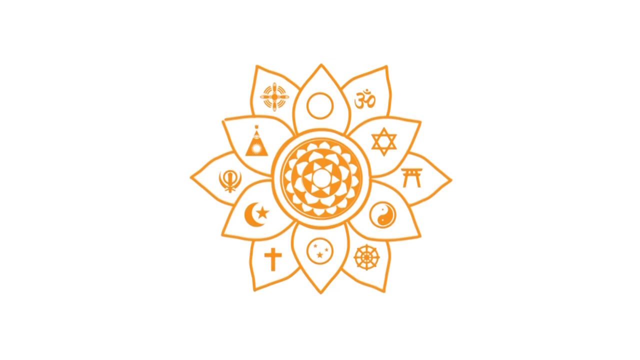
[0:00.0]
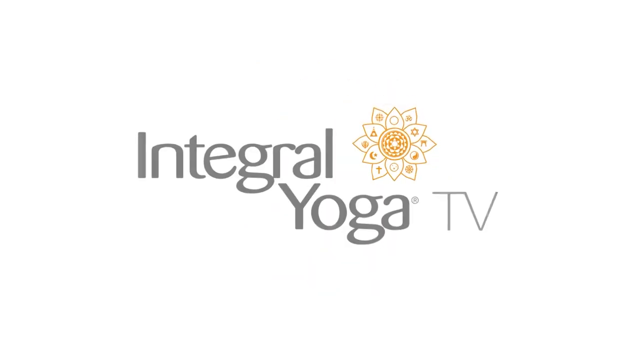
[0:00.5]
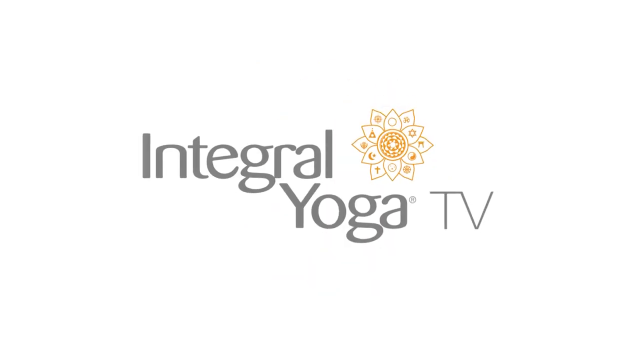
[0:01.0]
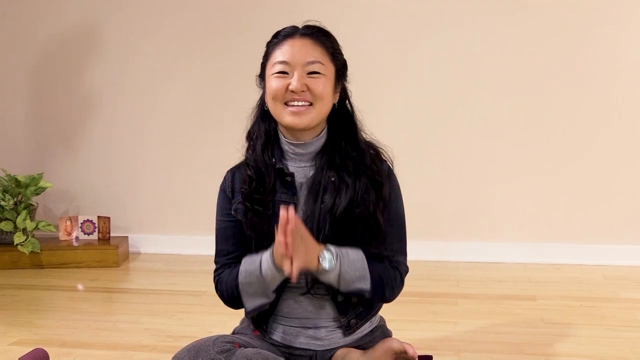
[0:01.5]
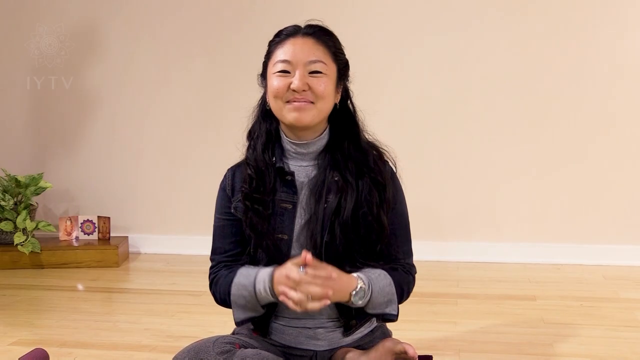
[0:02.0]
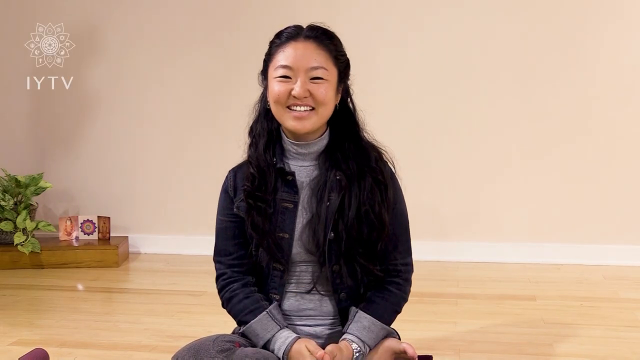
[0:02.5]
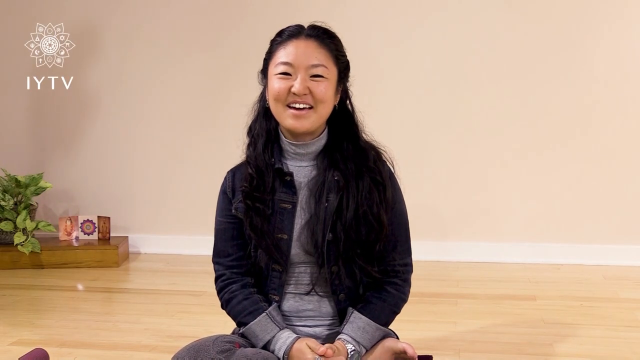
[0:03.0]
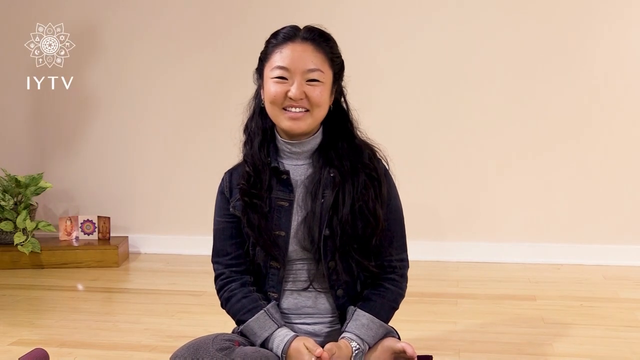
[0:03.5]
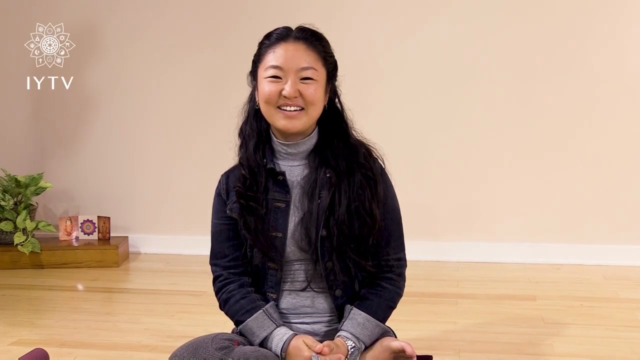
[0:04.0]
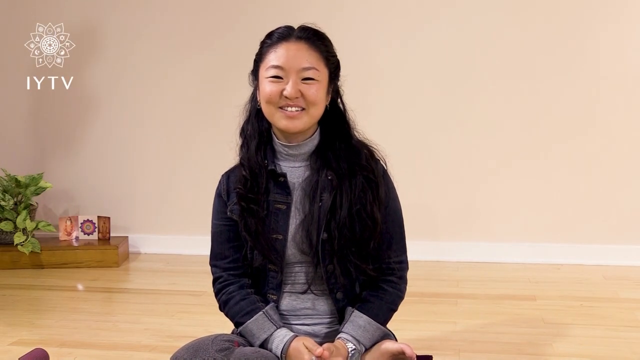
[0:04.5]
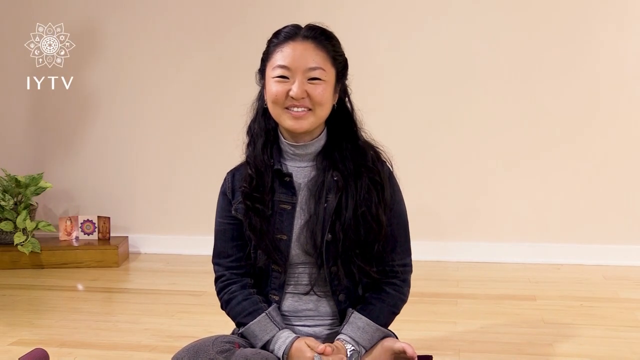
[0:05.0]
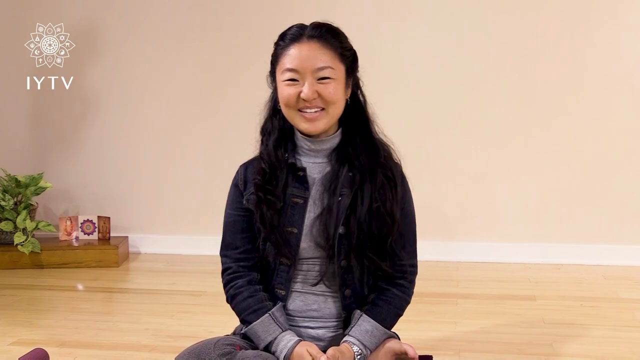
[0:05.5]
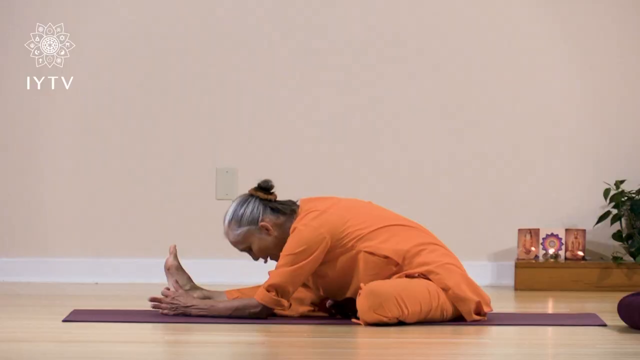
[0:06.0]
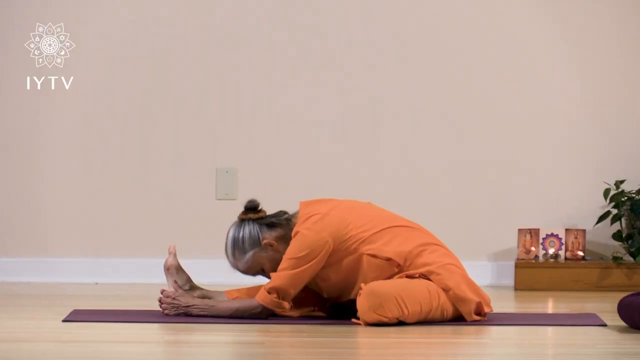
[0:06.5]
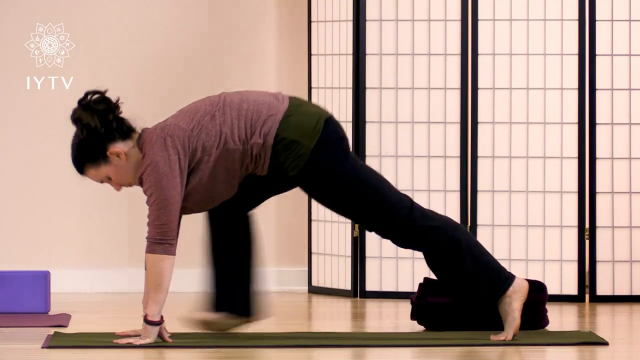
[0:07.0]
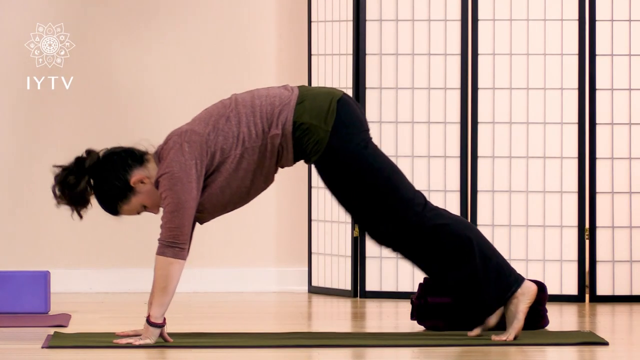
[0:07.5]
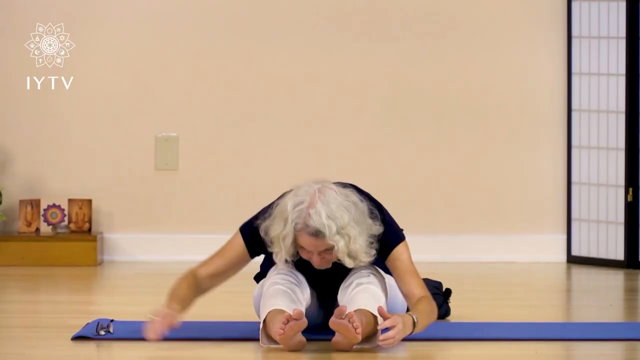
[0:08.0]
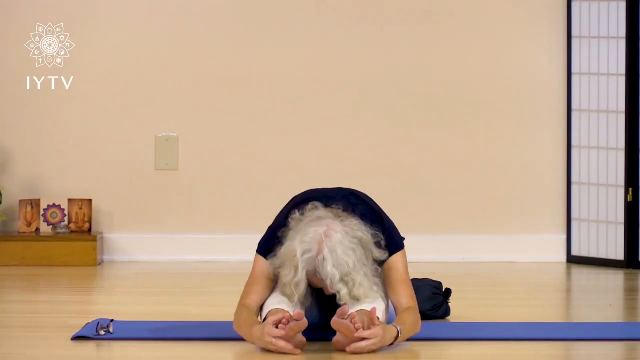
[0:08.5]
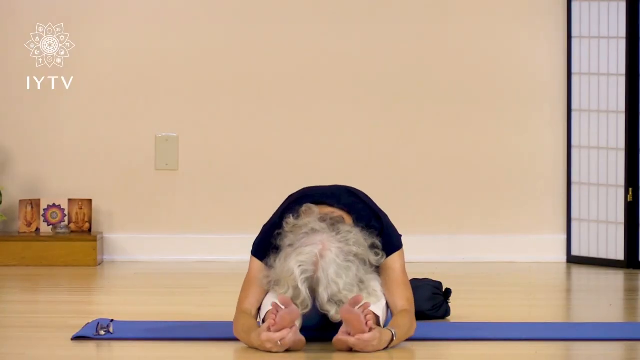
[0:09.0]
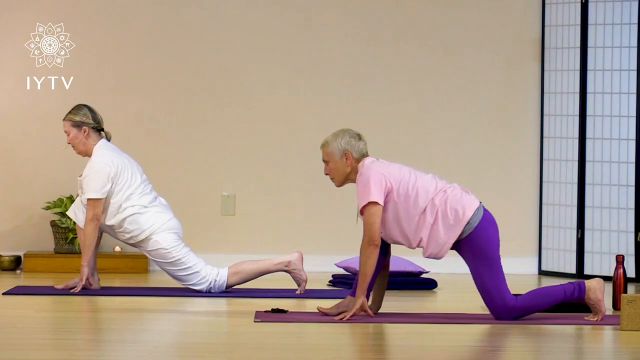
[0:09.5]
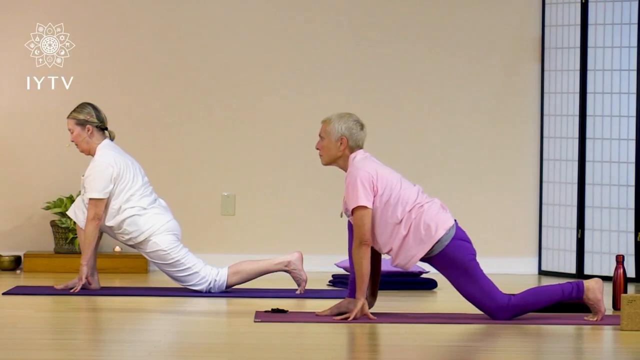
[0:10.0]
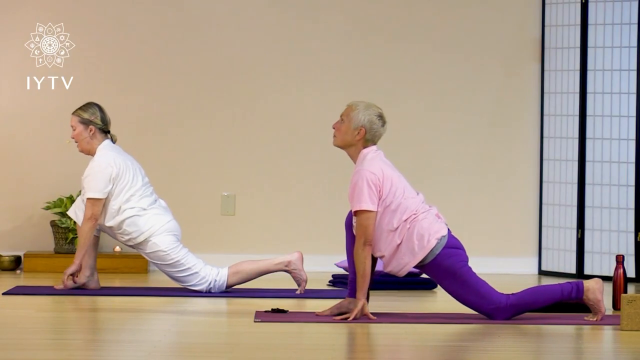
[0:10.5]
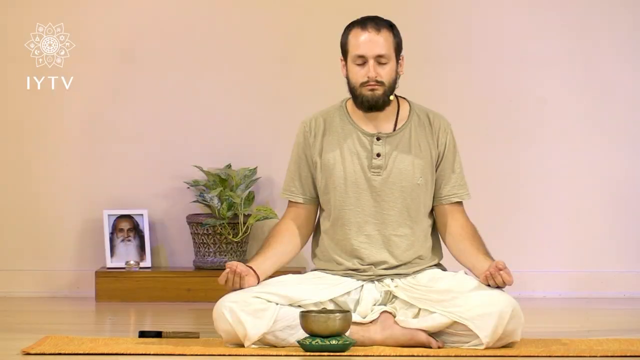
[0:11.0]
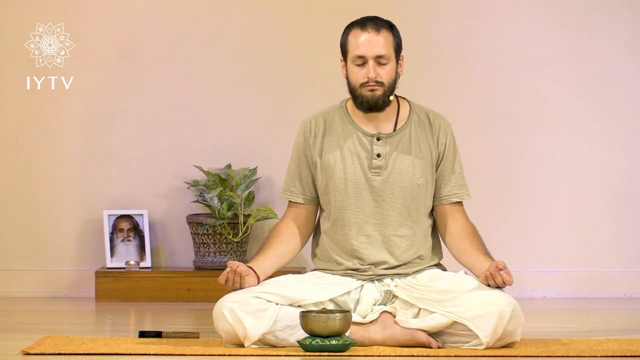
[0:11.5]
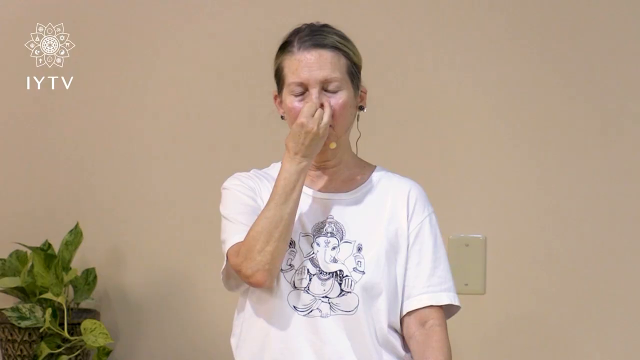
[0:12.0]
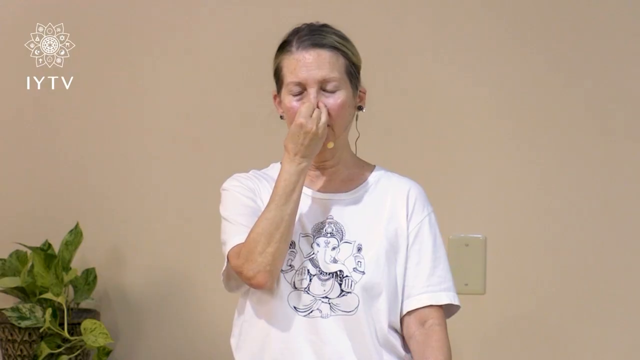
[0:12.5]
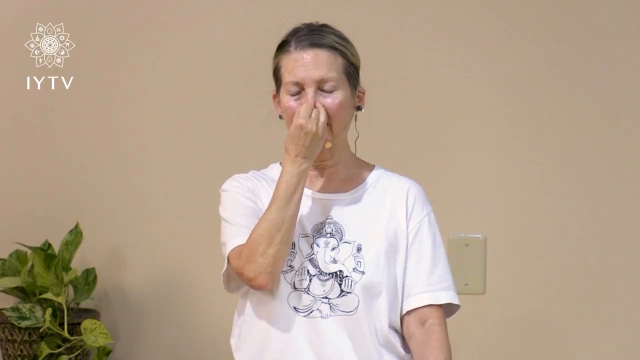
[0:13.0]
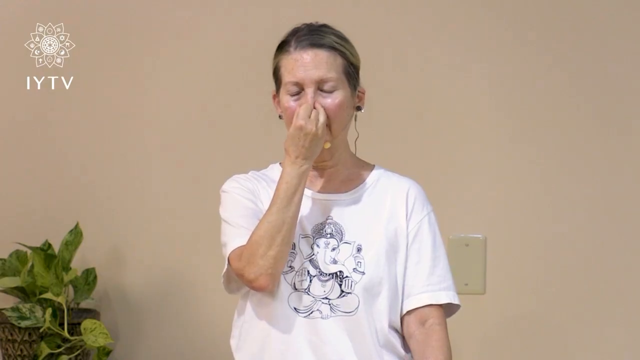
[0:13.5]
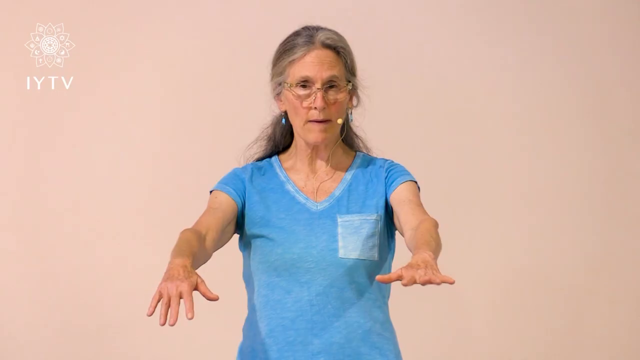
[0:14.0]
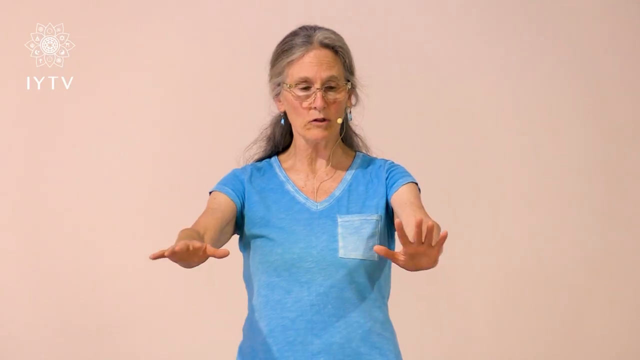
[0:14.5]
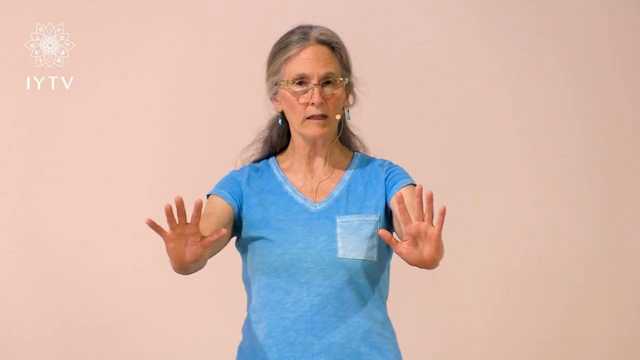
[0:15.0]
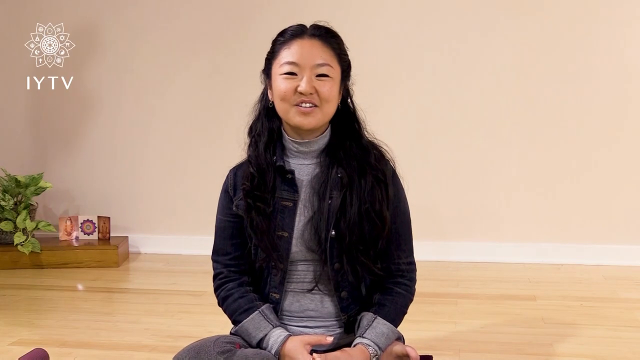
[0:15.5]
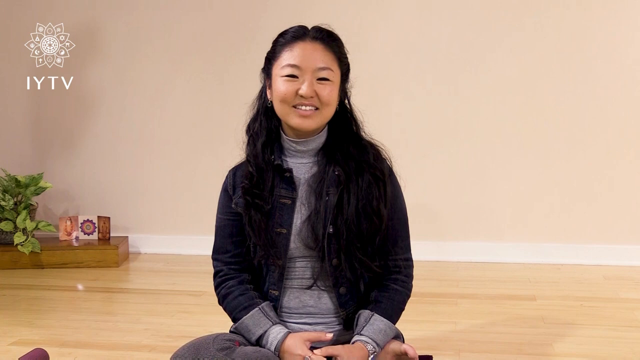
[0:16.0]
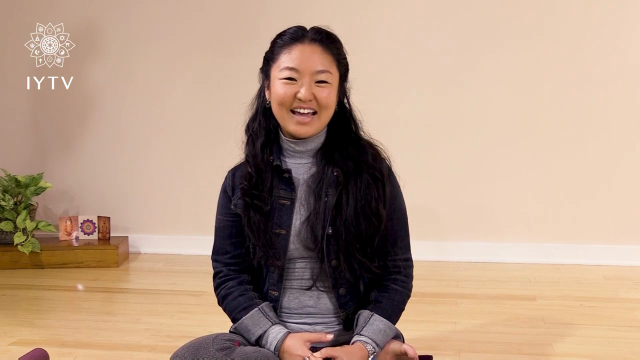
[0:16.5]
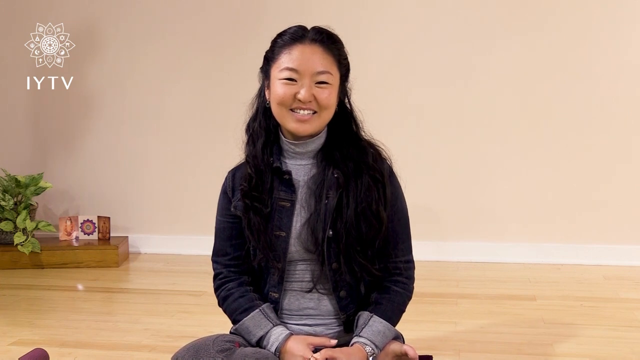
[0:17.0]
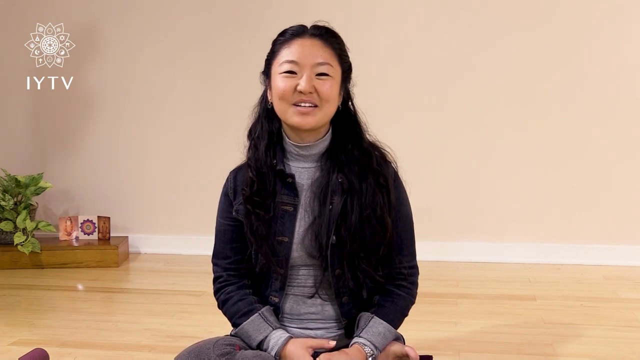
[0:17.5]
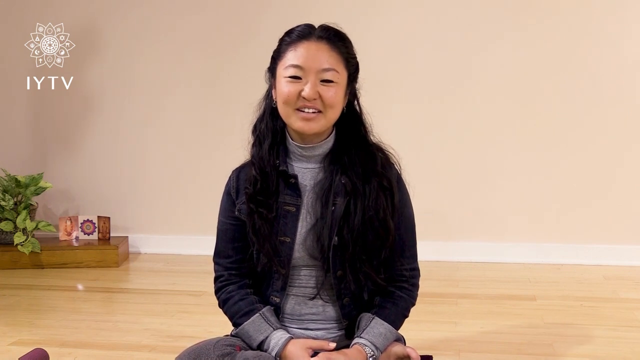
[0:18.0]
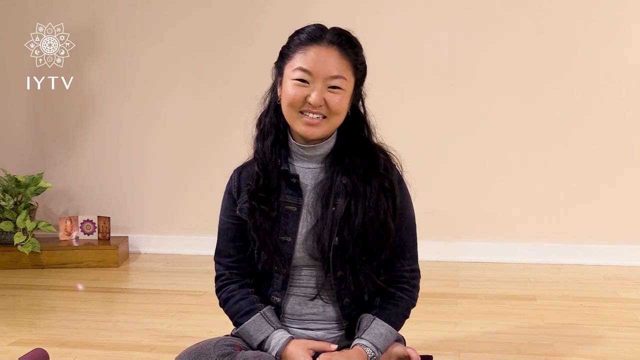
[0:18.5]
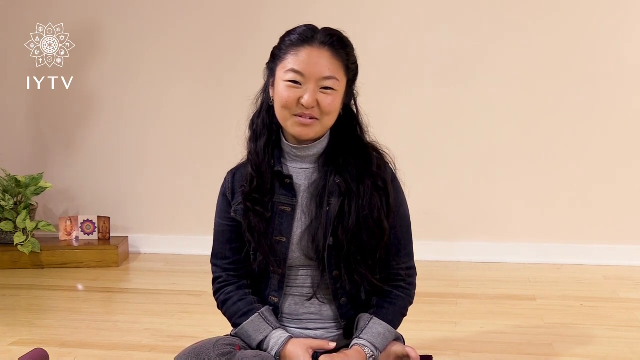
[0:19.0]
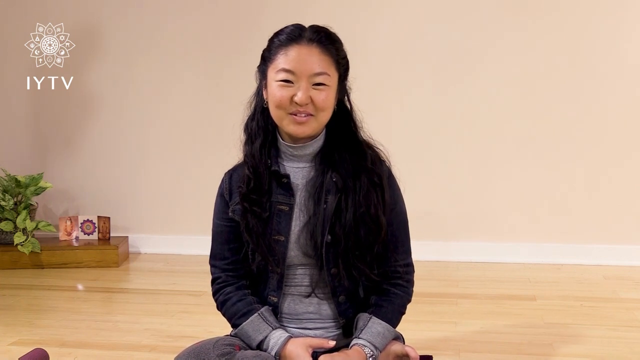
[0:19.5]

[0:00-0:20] An orange flower appears with some unclear symbols, and as the video starts, Integrated Yoga TV appears. A young Asian woman, apparently between 20 and 30 years old, sits on the floor in what looks like some kind of studio. She wears a jean jacket and a gray turtleneck shirt and has a beautiful smile. Someone then does several different yoga poses. An older lady does yoga poses on the ground, and one of the women does a downward dog motion while moving her legs. Another older lady stretches on the floor. Several other people do yoga poses and meditation; one lady holds her nose and another lifts up her hands. The young Asian woman appears again, speaking to the camera and looking directly at it with a beautiful smile on her face.